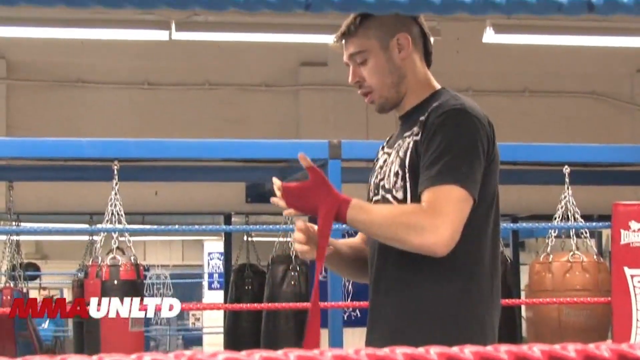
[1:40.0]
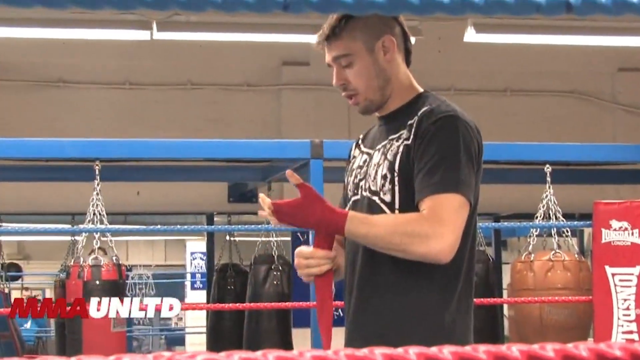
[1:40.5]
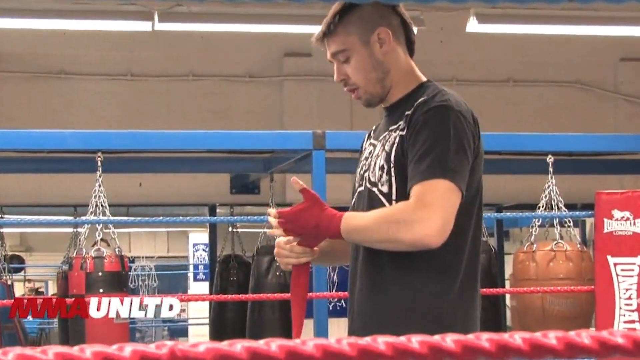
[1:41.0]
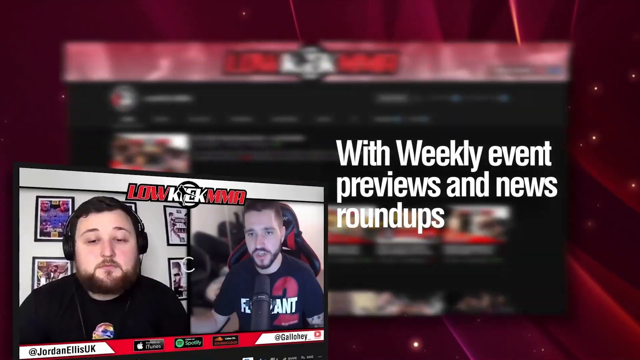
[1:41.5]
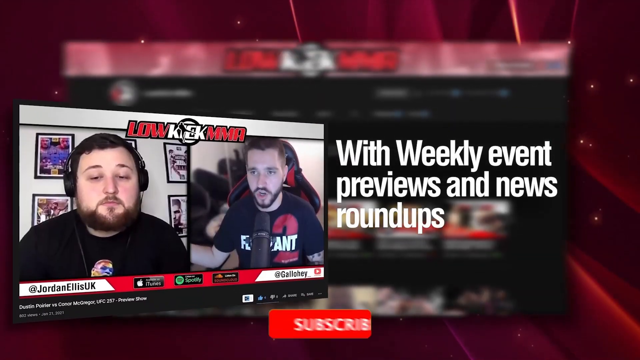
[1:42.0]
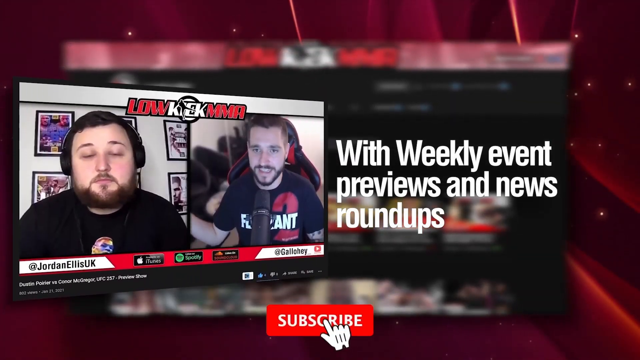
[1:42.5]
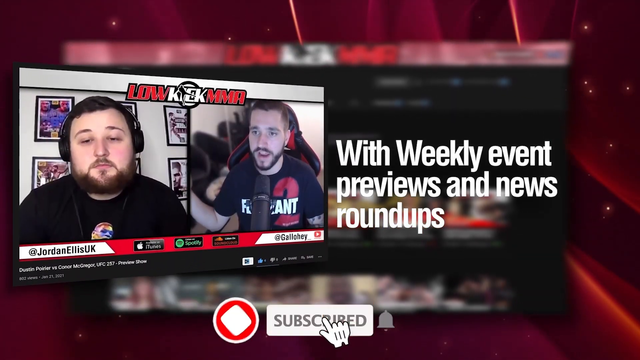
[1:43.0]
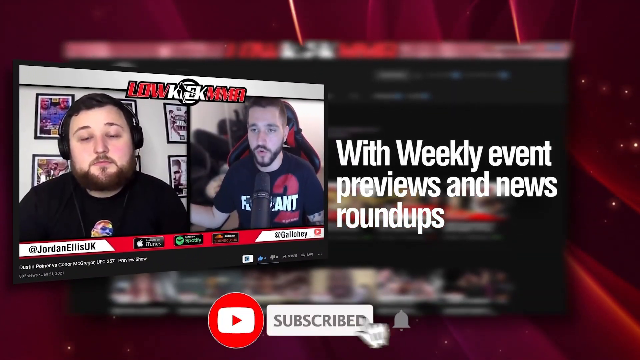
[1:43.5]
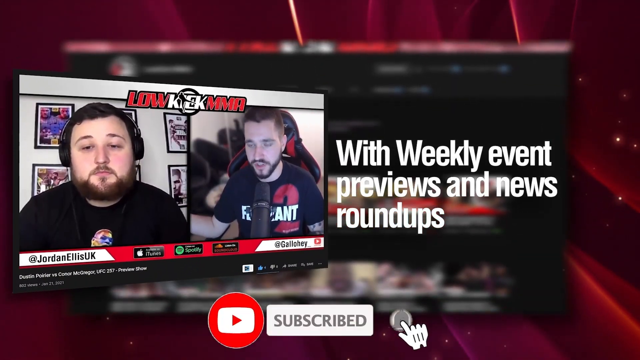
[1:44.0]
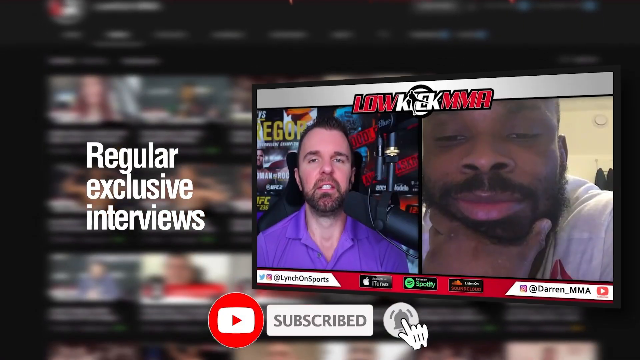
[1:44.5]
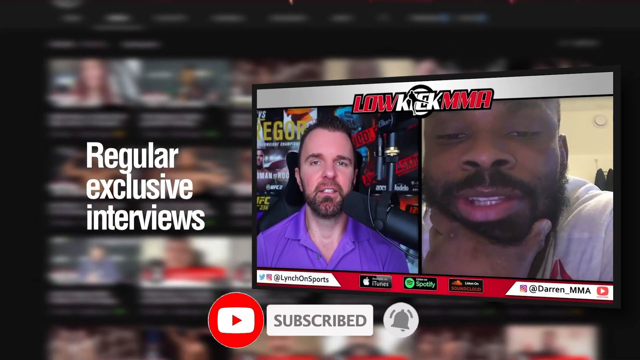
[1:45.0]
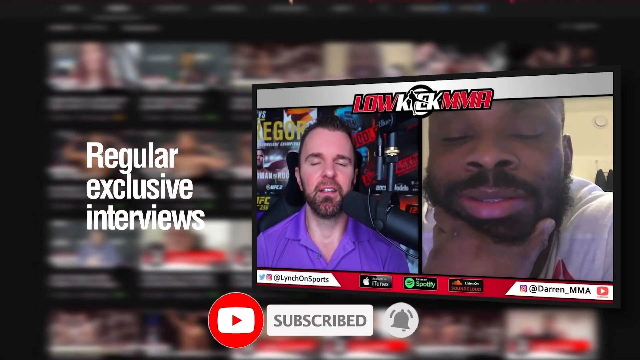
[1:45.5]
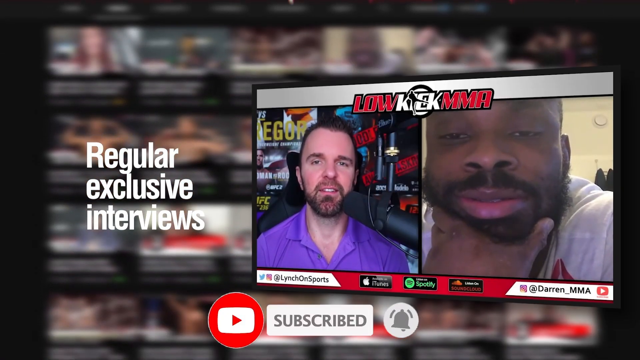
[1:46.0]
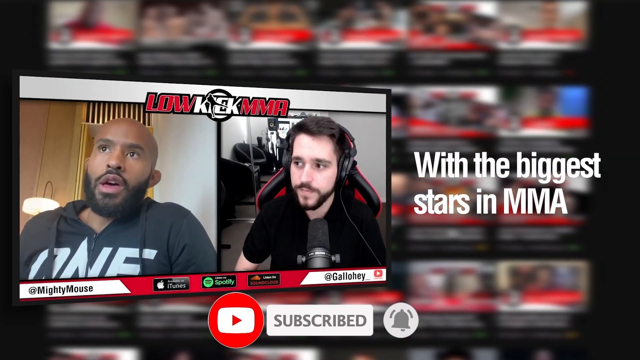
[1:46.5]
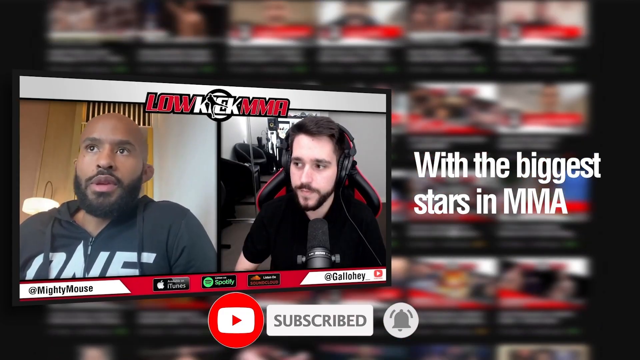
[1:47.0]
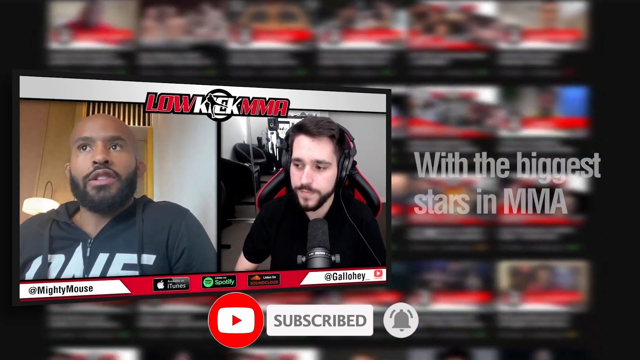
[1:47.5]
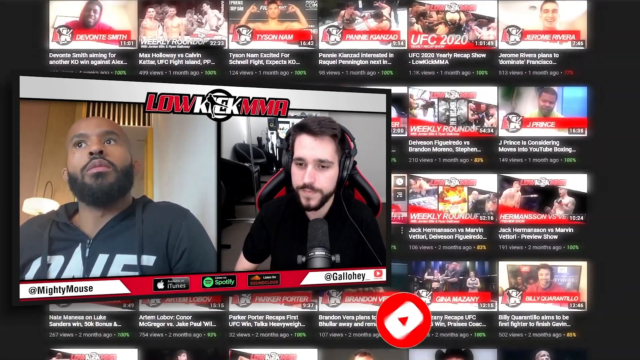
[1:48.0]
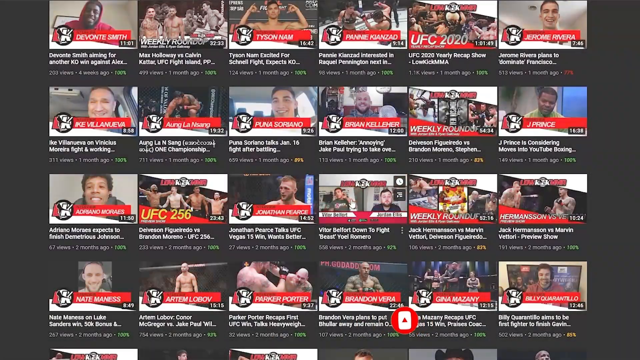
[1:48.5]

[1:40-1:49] A man stands inside a square MMA fighting ring with blue and red ropes, and punching bags are visible in the background outside the ring. He wears red fingerless gloves and a black t-shirt, and has short brown hair and a neatly trimmed beard. He adjusts his gloves, and then the screen cuts to a YouTube end card. A caption on the screen says "With weekly event previews and news roundups," and an inline video labeled Low Kick MMA shows two men interviewing each other. The man on the left is a heavyset bearded man with brown hair wearing a headset, and the man on the right is a thinner man with short brown hair and a beard, wearing a black t-shirt with a red number 2 on it. The two men talk on screen. It then cuts to a different inline image of two men, a man in blue interviewing a man in white, also labeled Low Kick MMA. A caption on the left says "Regular exclusive interviews with the biggest stars in MMA." Then it cuts to another video of an interview between two men, a bald man with a beard and a thin man with brown hair.